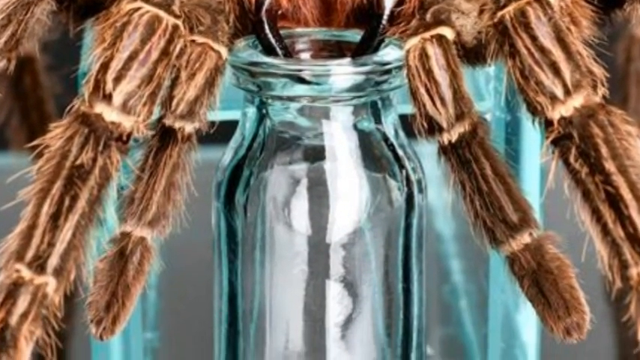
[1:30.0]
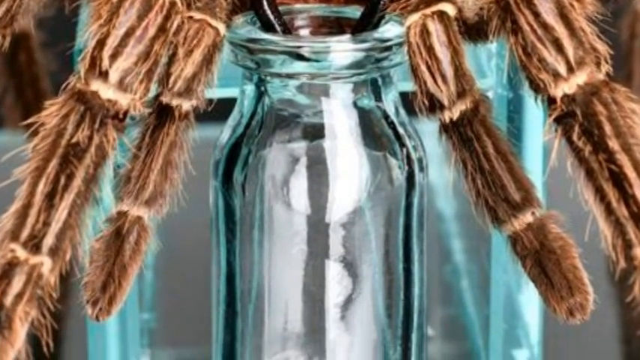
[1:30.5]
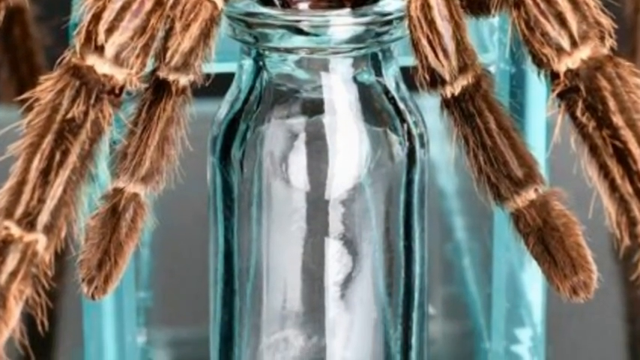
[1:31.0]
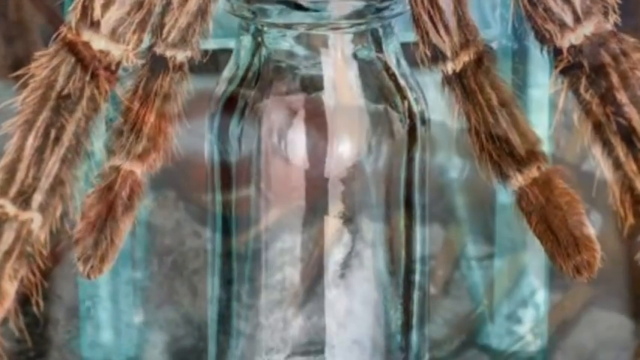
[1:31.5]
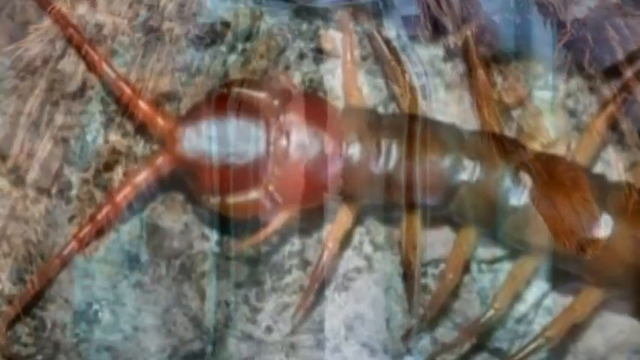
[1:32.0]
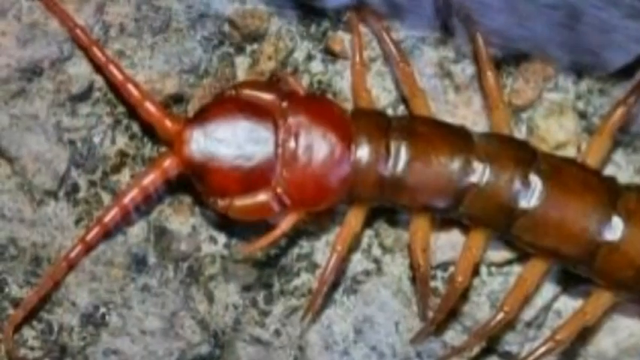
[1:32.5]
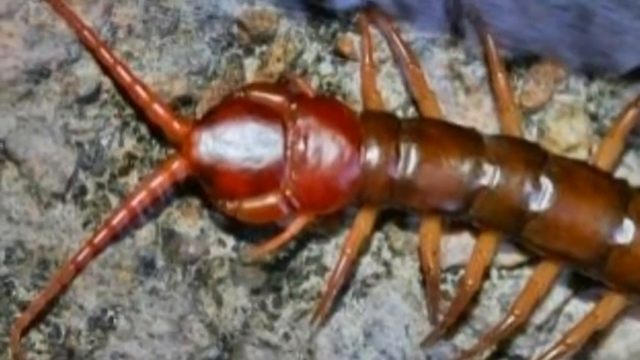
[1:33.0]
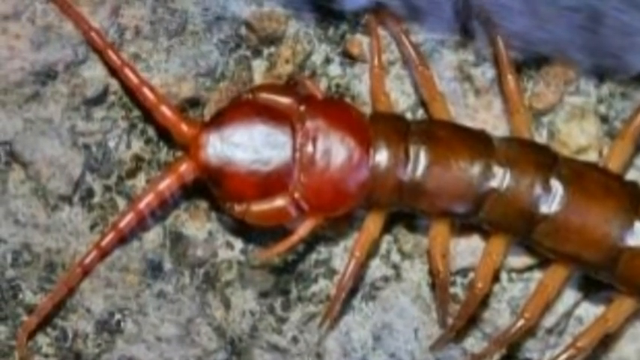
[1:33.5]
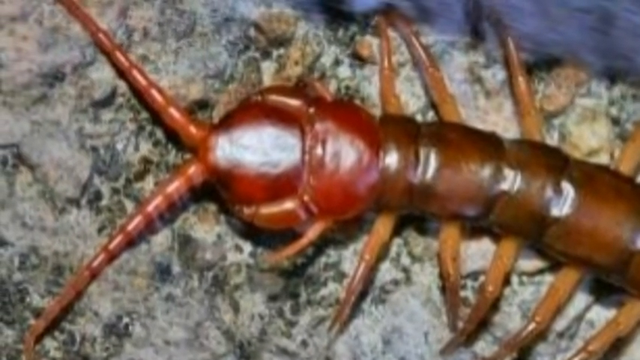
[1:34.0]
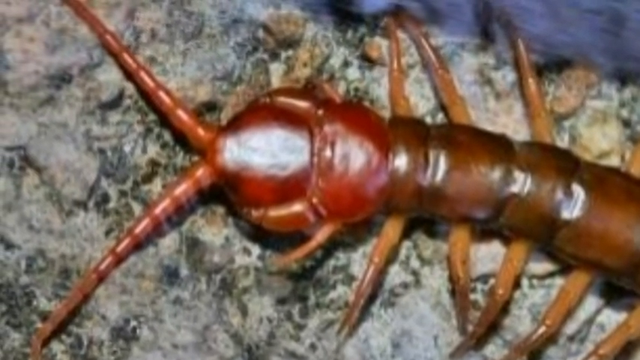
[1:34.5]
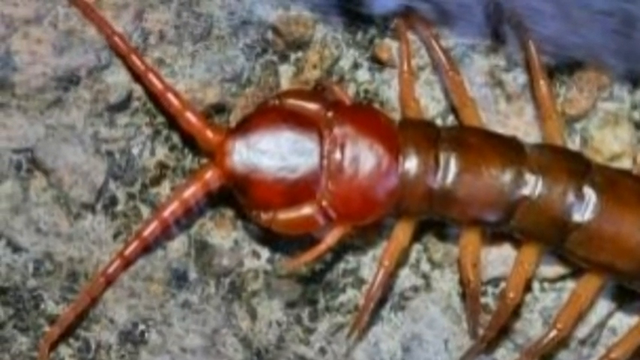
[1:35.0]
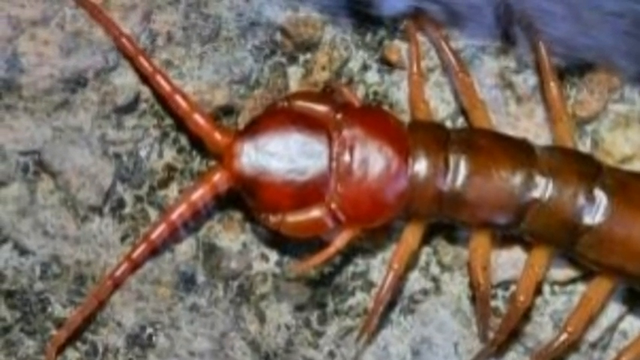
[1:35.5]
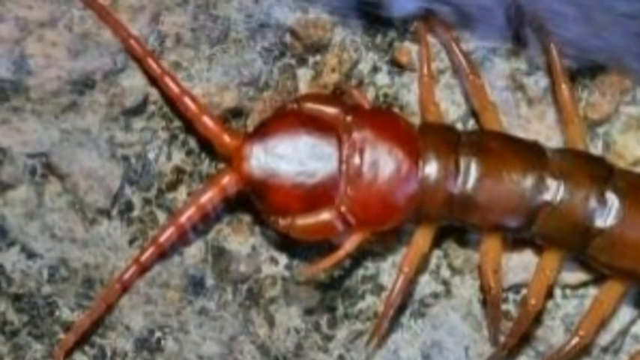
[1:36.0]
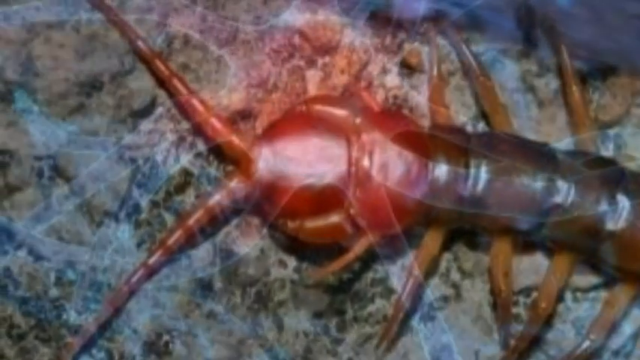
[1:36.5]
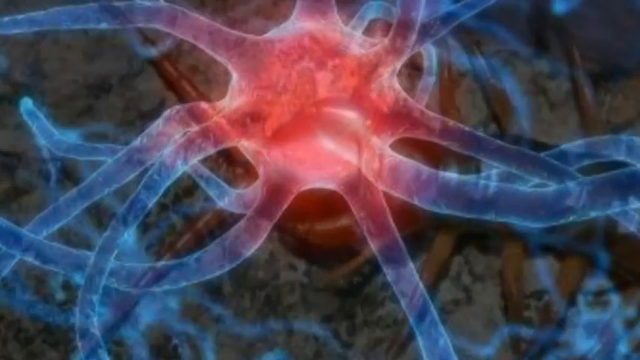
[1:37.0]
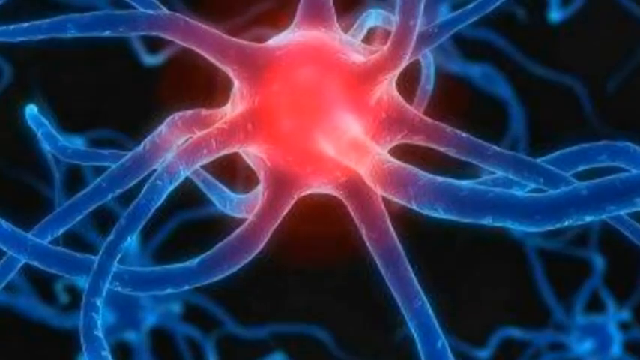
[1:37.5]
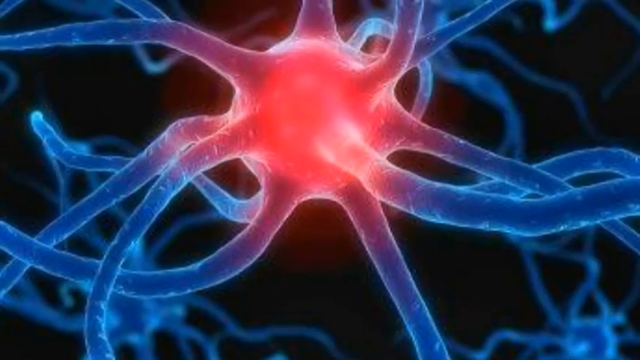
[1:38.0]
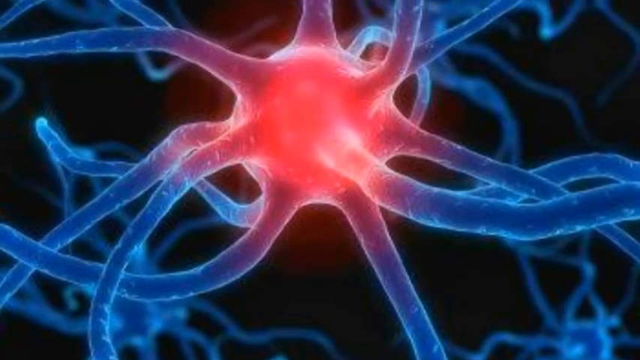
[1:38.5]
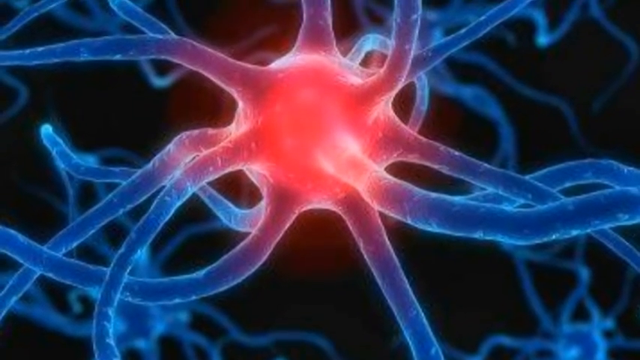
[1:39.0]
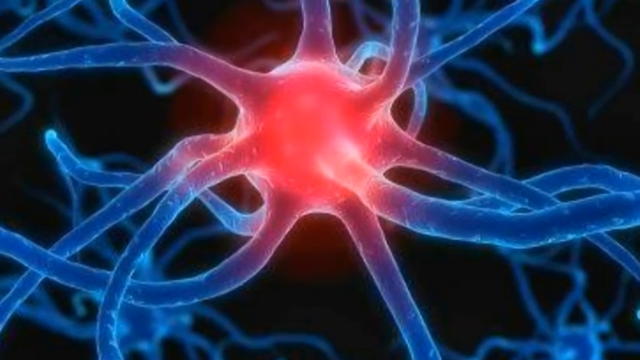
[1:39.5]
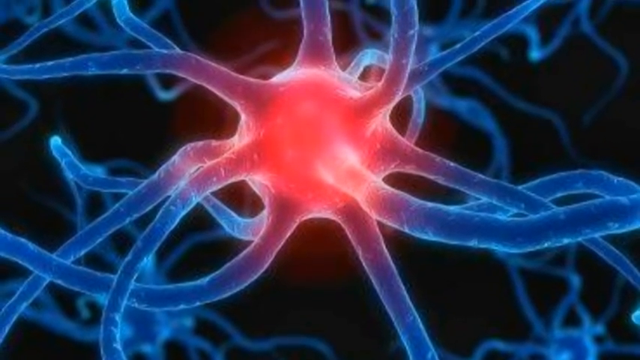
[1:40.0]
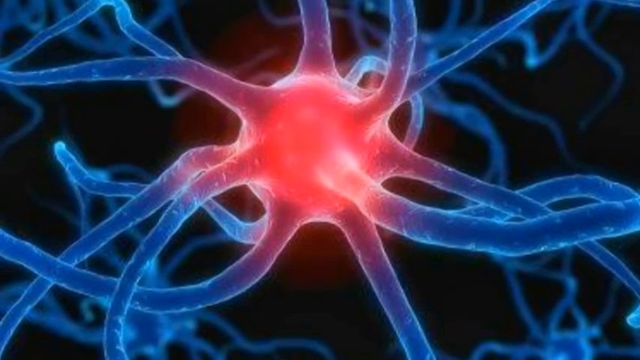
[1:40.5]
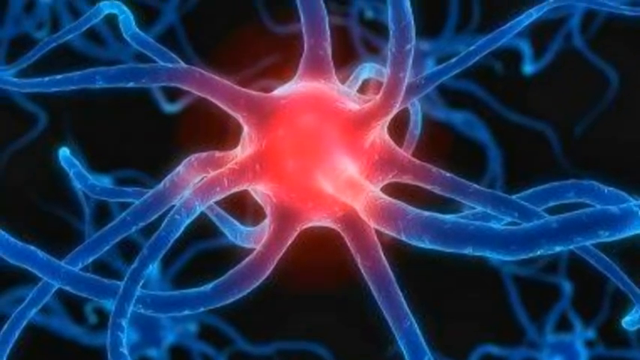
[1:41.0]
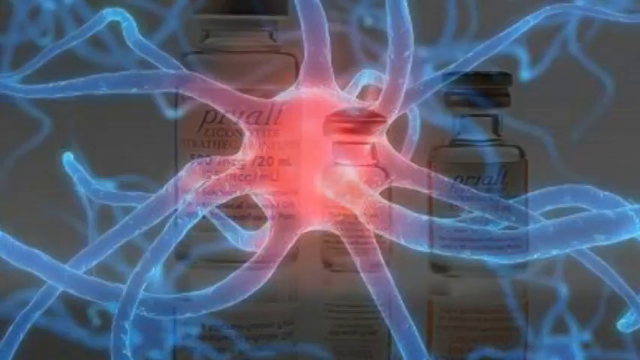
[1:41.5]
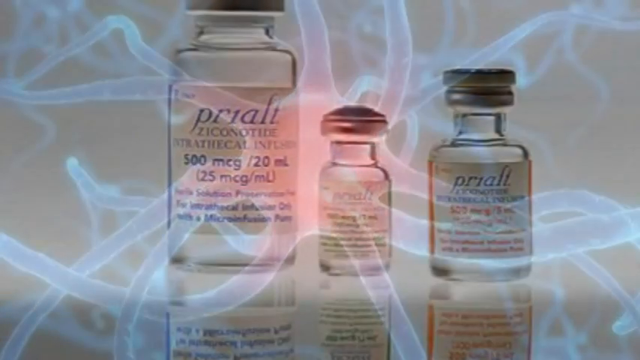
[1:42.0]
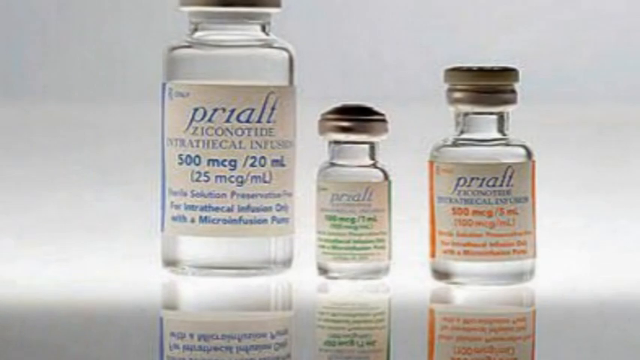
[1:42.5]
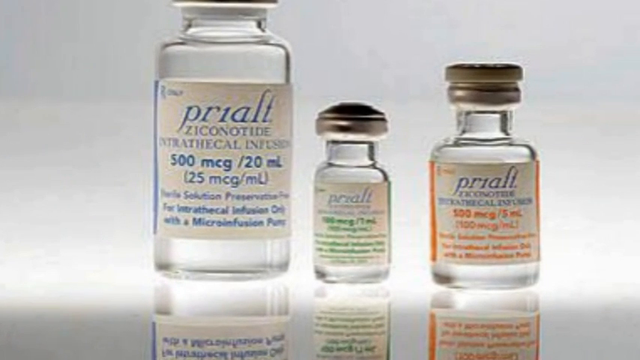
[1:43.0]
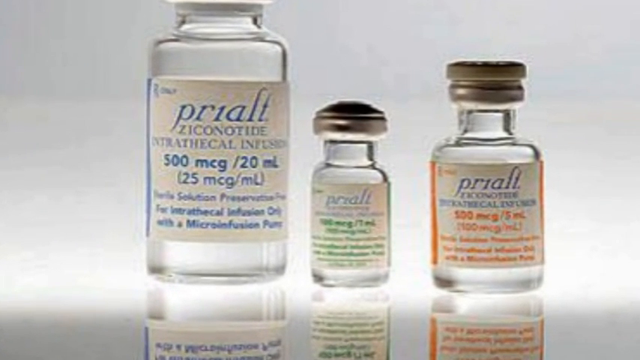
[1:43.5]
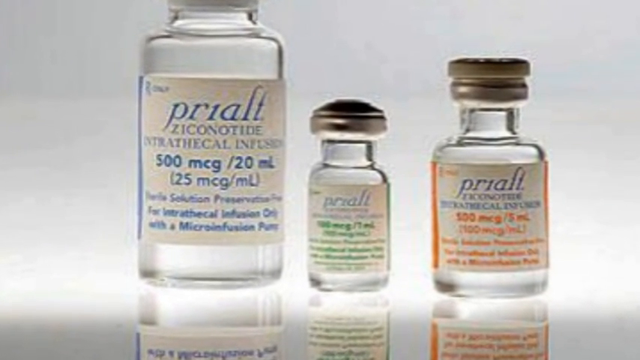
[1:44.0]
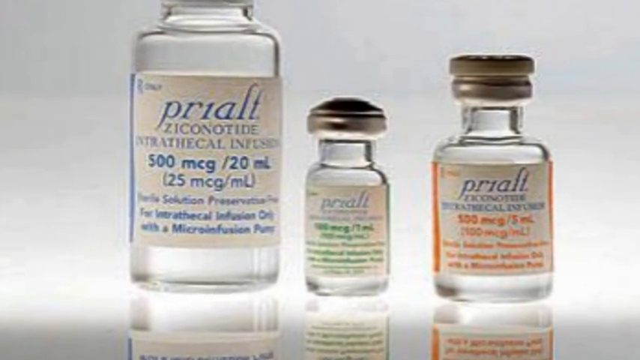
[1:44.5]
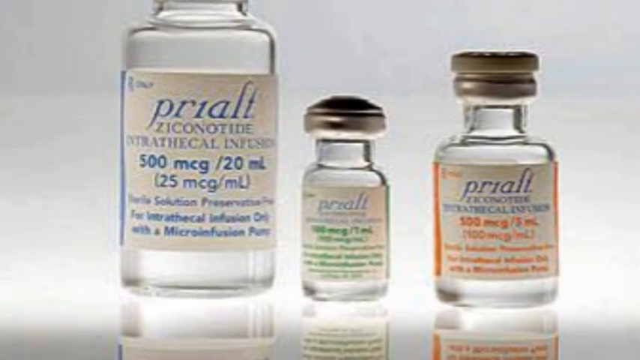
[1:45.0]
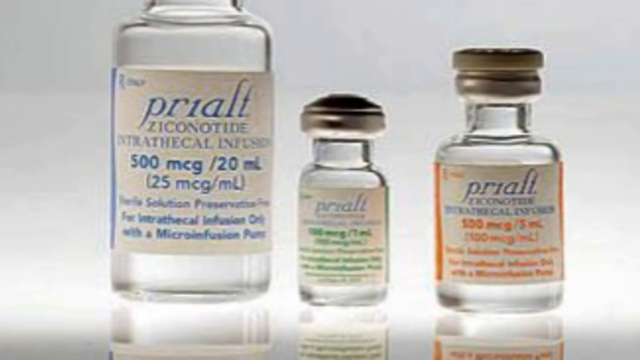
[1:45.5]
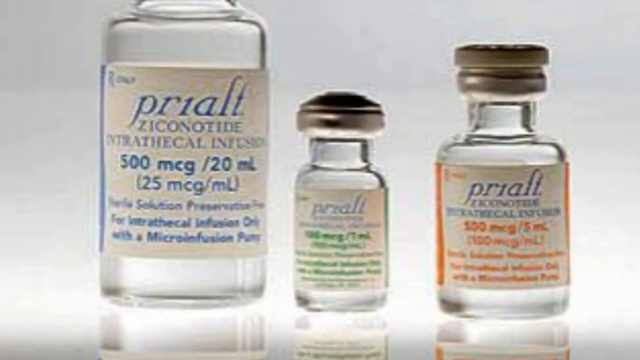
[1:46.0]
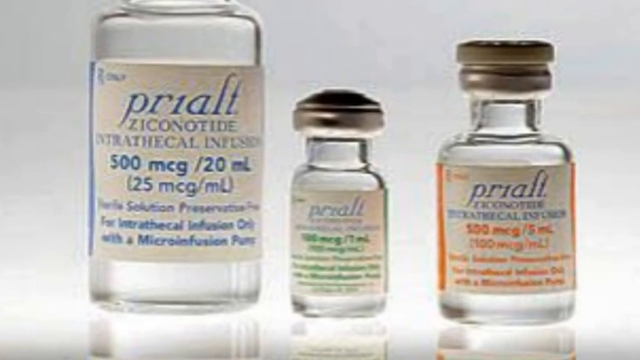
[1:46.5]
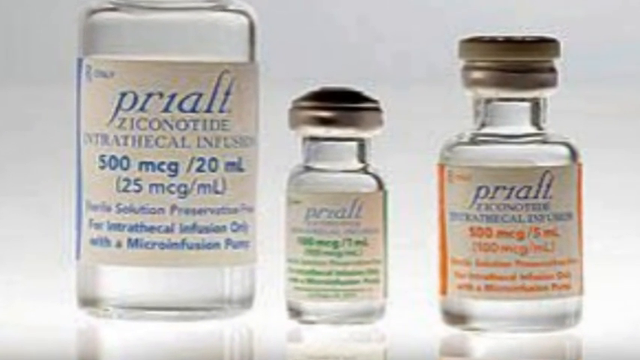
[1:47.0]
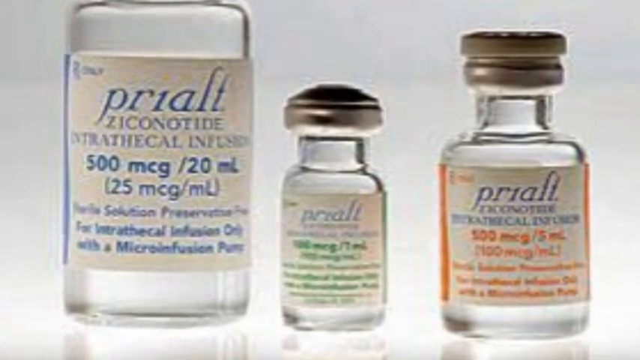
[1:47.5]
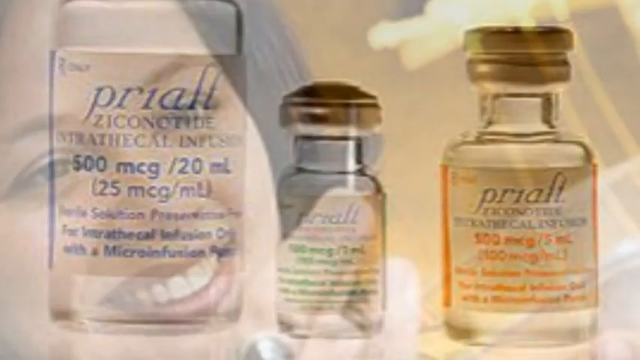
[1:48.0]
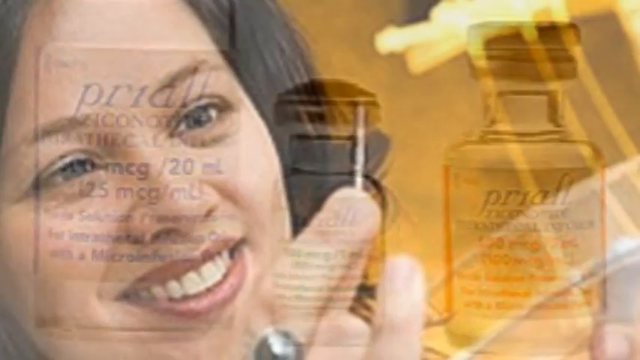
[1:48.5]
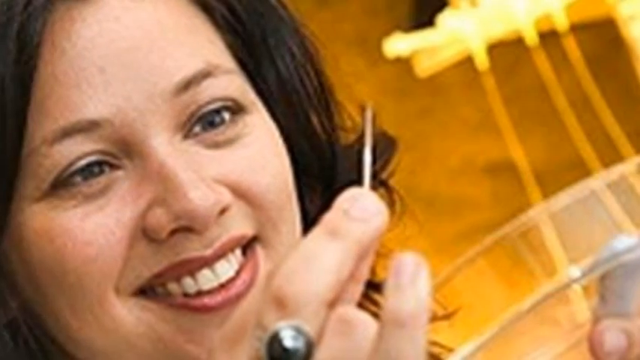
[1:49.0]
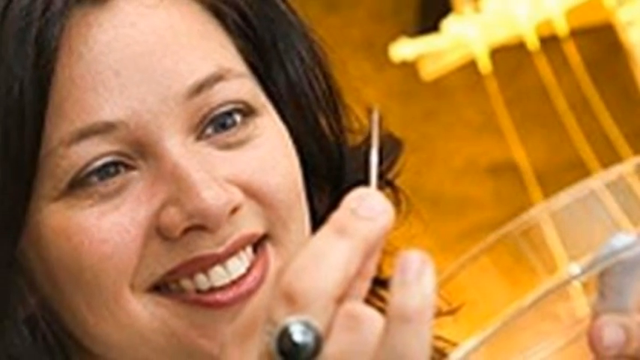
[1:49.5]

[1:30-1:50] The spider injects into the glass jar. Next comes what appears to be a scorpion or some other stinging, prehistoric-like creature, followed by a graphic of what appears to be a nerve. The camera then zooms slowly in a close-up on three bottles of some type of substance, with the words "pre-alt" and "ZICONOTIDE", and a word beginning "anti-". The video then switches to a still shot of a middle-aged woman, perhaps a doctor or a nurse, smiling and holding what appears to be some type of needle or pin.